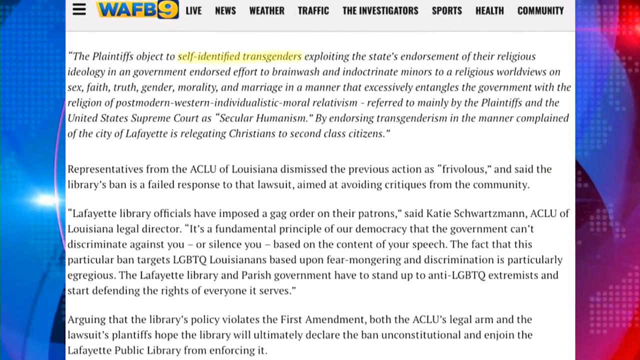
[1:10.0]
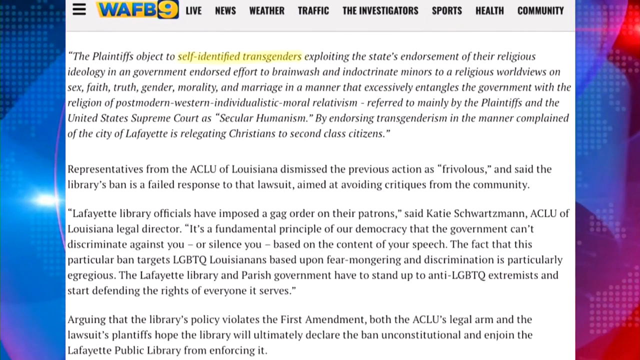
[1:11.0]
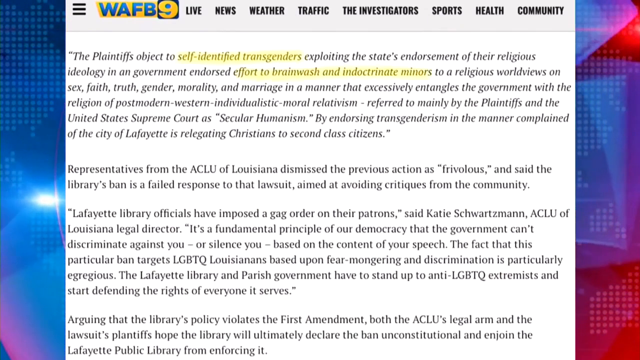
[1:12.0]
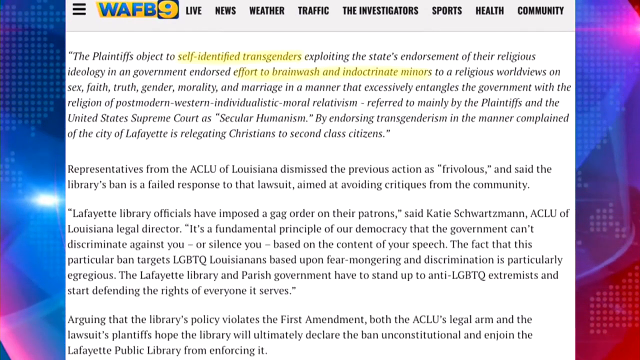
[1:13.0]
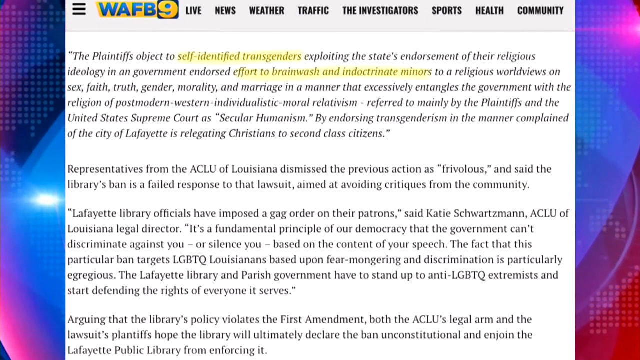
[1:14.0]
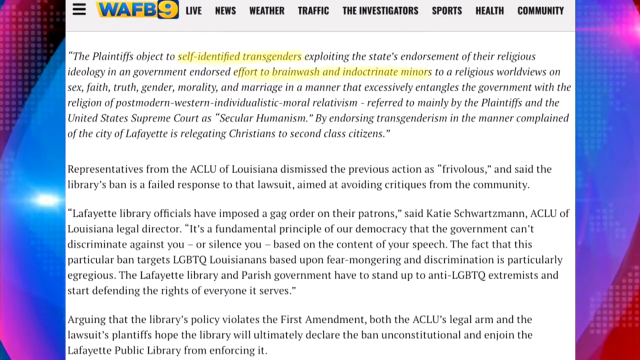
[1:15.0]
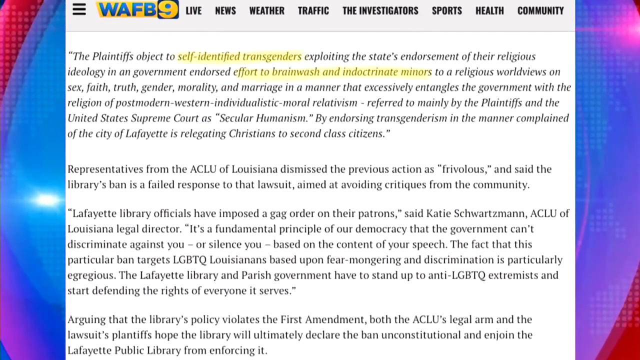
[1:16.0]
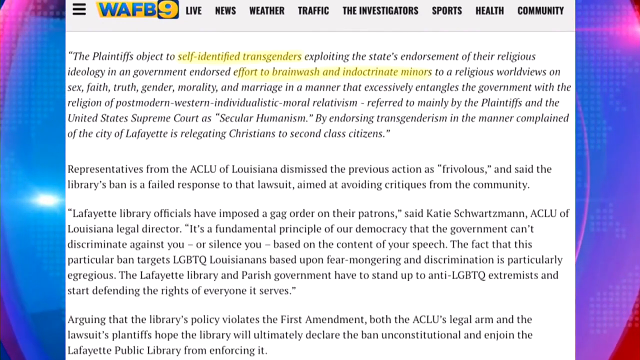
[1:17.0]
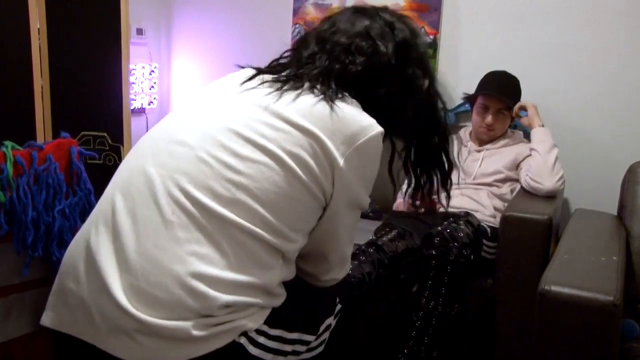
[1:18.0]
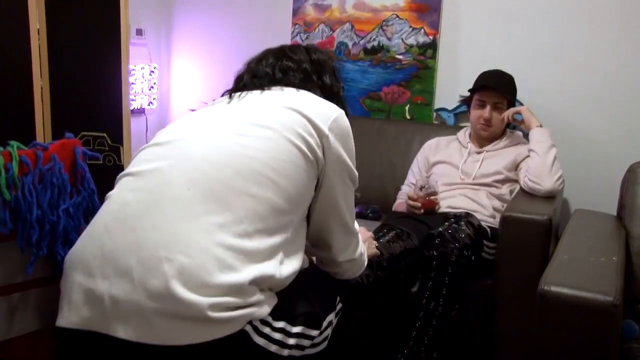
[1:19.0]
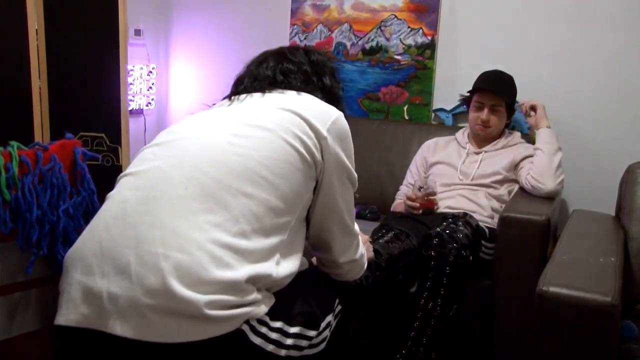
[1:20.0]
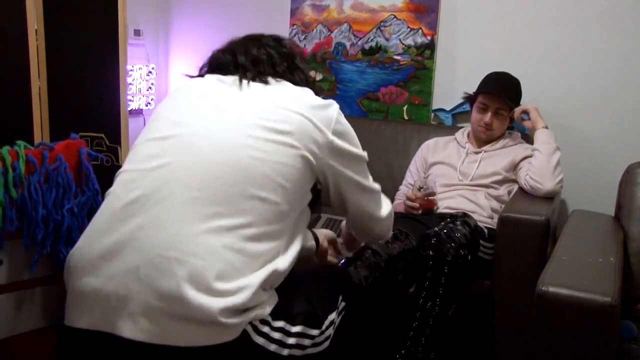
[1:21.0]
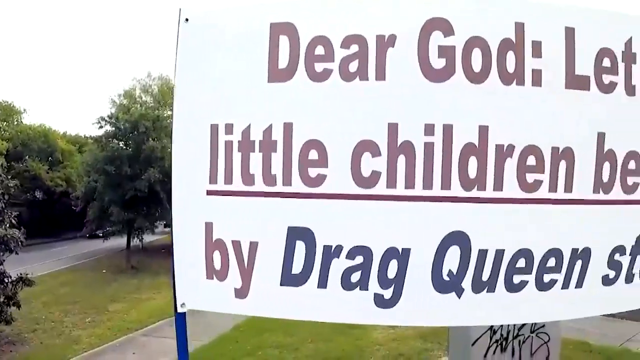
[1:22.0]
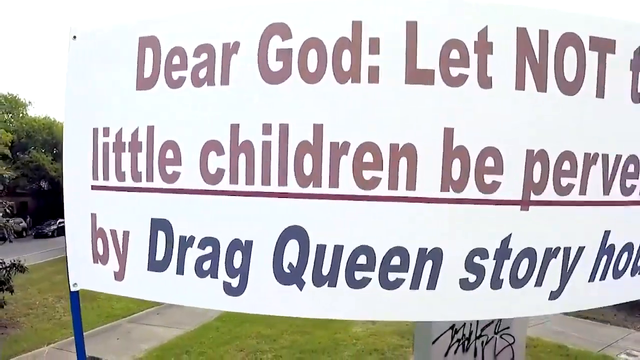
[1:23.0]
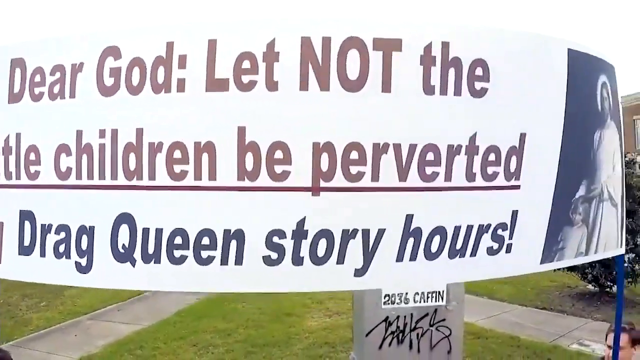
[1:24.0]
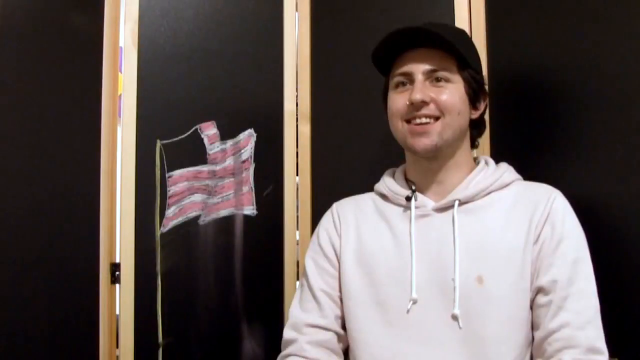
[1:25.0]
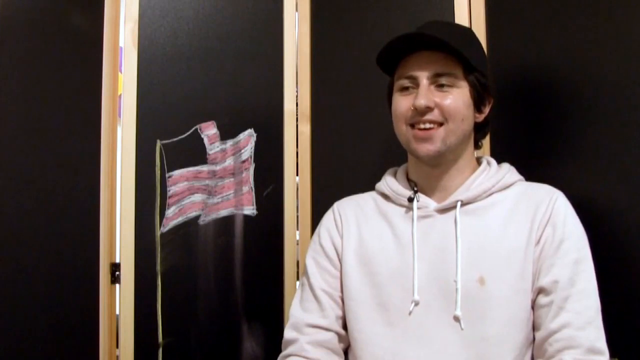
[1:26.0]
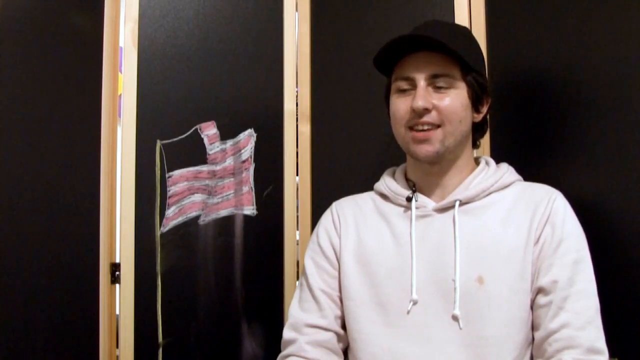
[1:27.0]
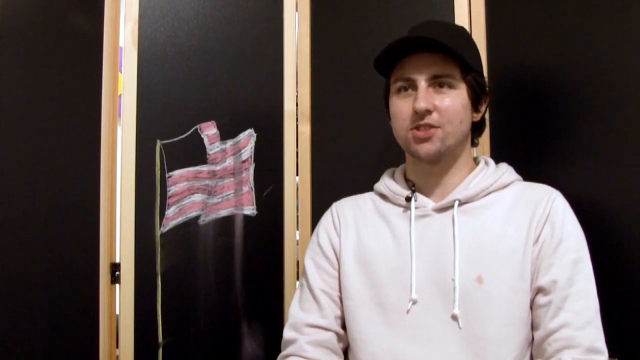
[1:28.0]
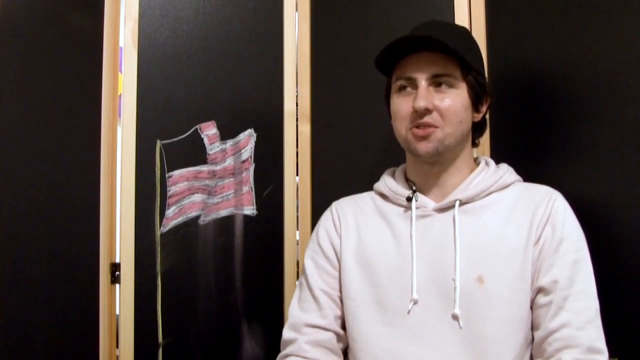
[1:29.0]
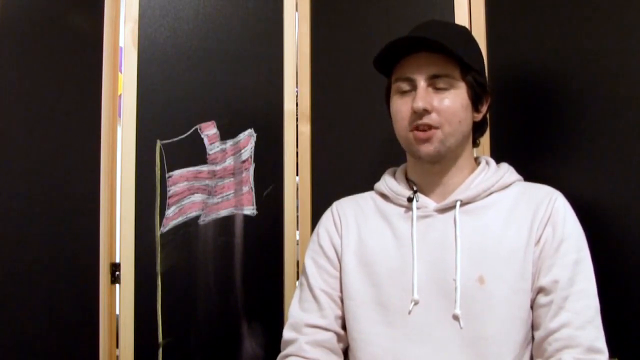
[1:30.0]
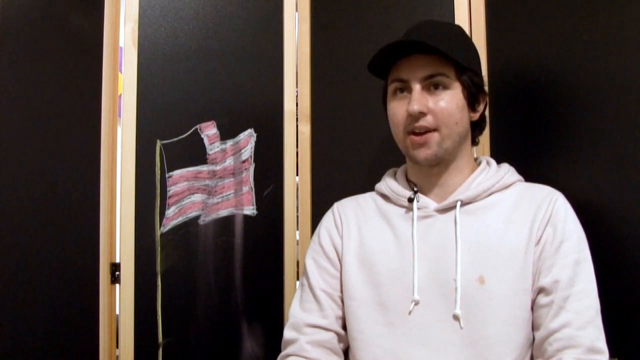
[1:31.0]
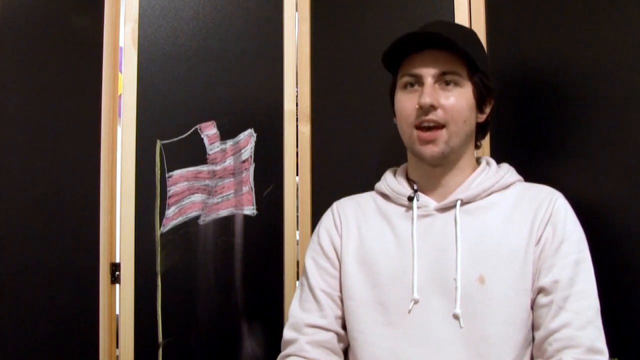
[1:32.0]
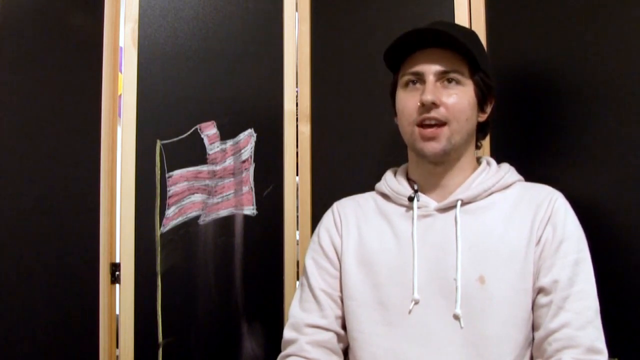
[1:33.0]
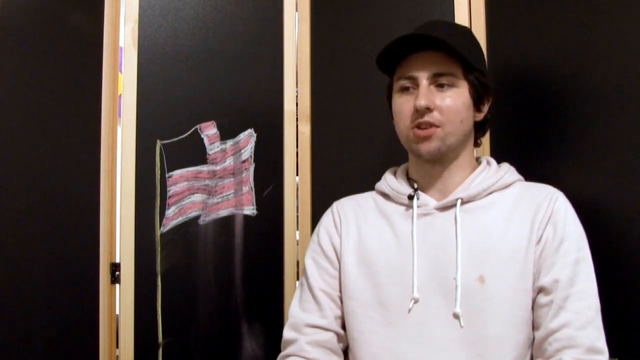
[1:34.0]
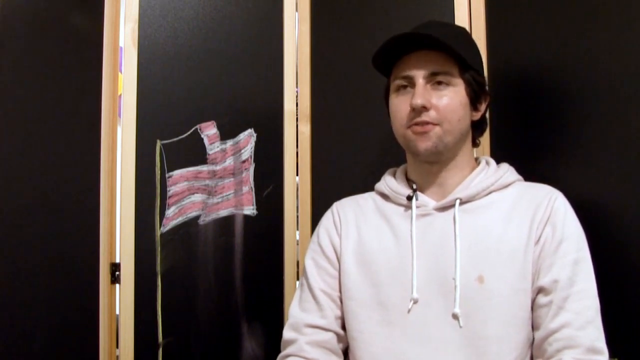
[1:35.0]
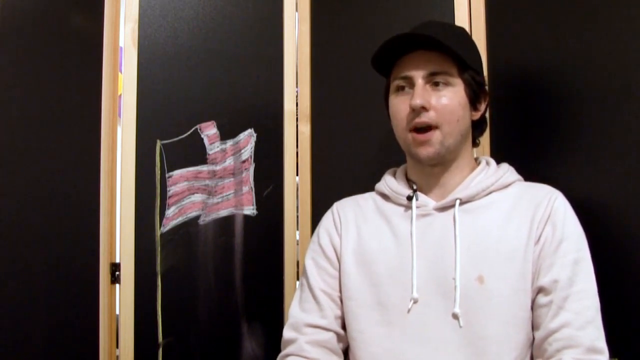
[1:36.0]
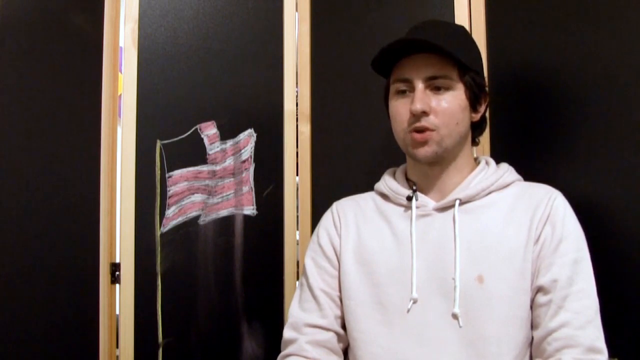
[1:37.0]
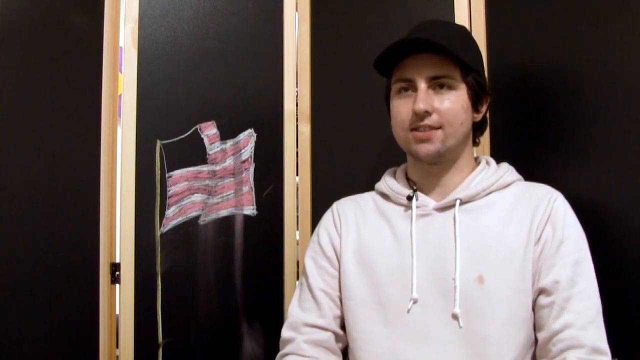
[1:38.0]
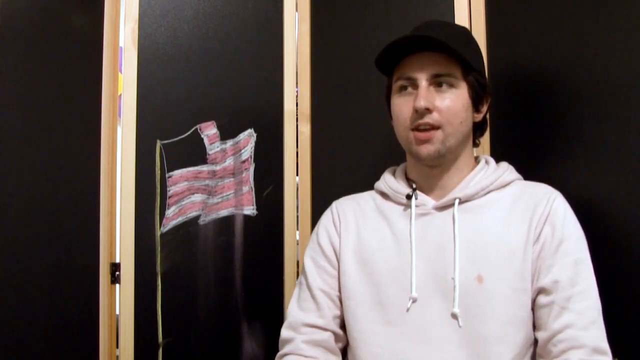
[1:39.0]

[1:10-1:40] Words on the document are highlighted in yellow, including "self-identified transgenders" and "effort to brainwash and indoctrinate minors". The view returns to the room of what appears to be the person seen applying makeup. They sit on a couch with somebody in front of them, holding a drink in their right hand with their left hand up to their face, while the other person, facing next to them, does something with their right knee. A different screen then shows a protest poster that reads "Dear God let not the little children be perverted by drag queen story hours", with a picture of a religious person on the board. The video goes back to the person on the couch, with a chalk drawing of the American flag to their left. They wear a neutral beige hoodie and a black hat, and talk to the camera, seeming very happy and friendly and looking around a lot.